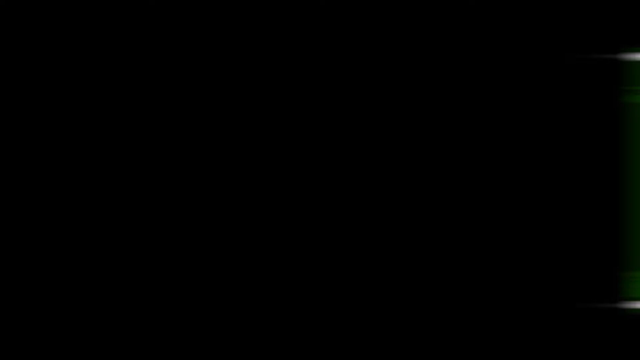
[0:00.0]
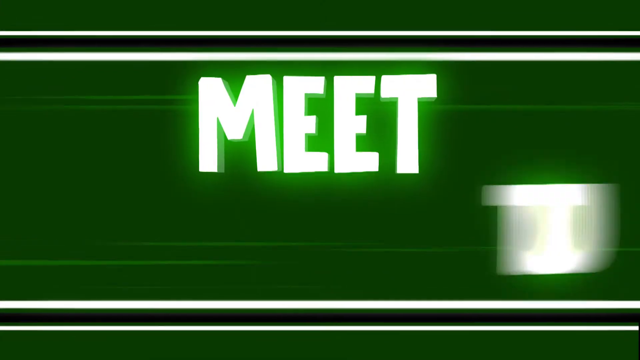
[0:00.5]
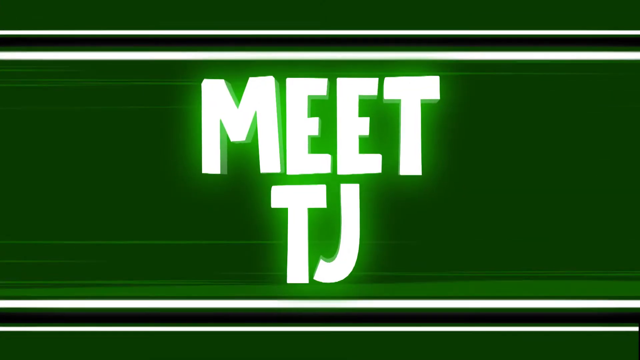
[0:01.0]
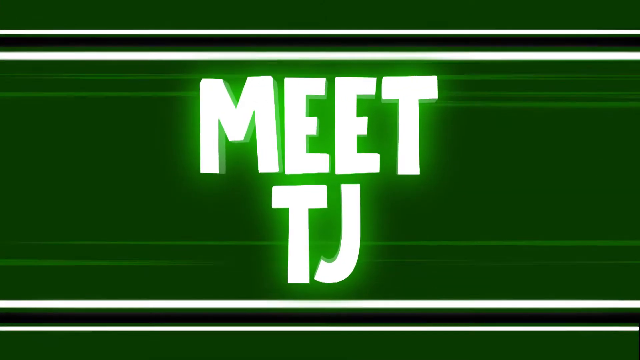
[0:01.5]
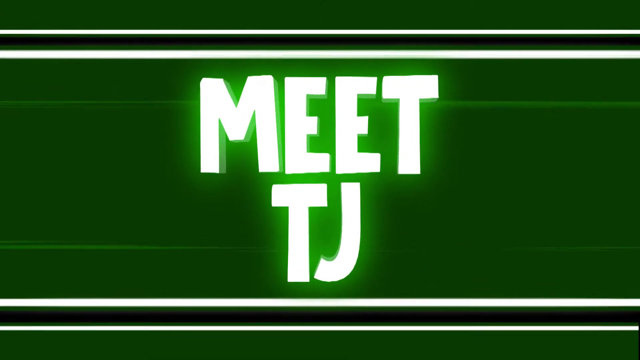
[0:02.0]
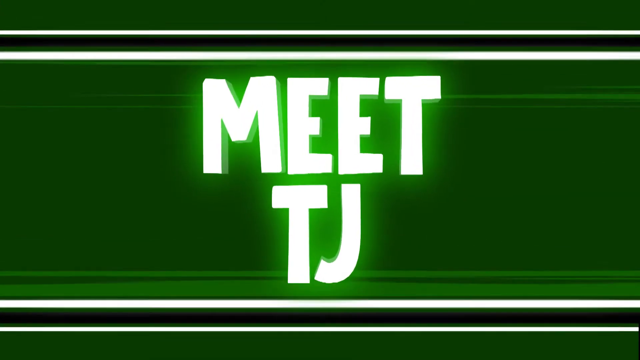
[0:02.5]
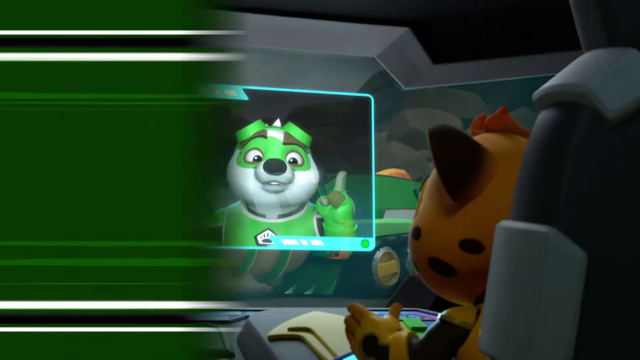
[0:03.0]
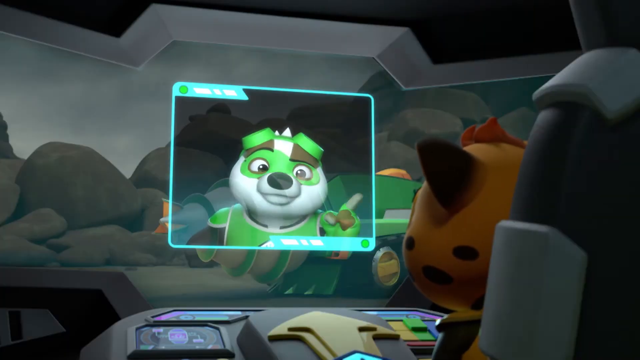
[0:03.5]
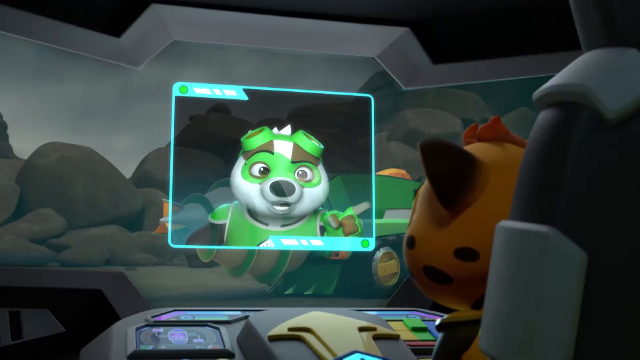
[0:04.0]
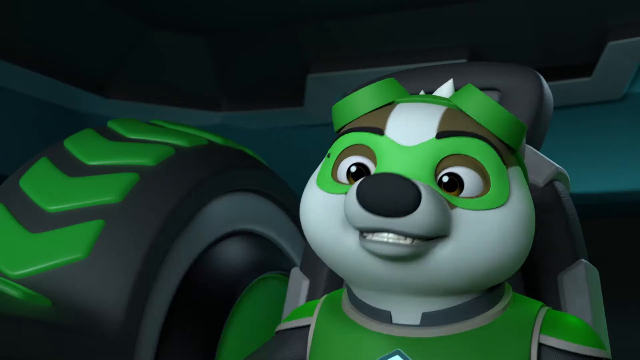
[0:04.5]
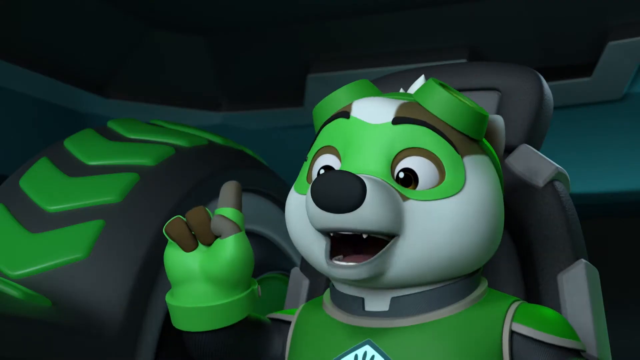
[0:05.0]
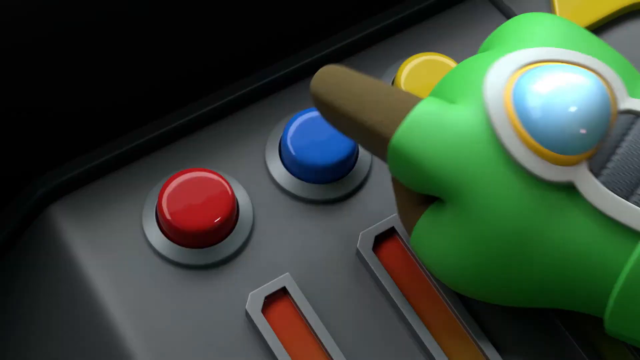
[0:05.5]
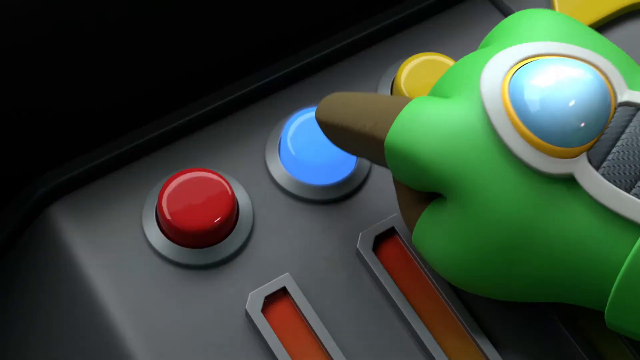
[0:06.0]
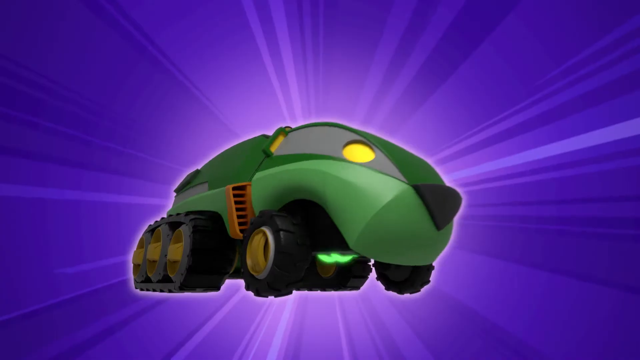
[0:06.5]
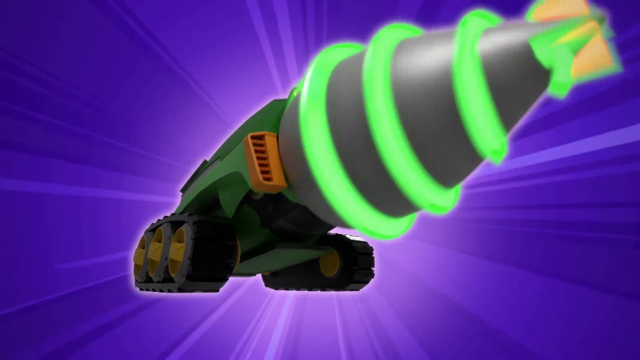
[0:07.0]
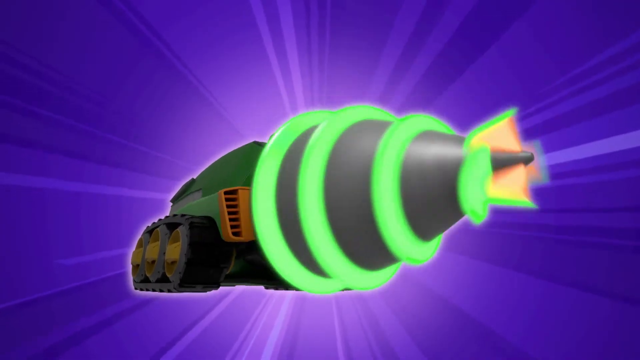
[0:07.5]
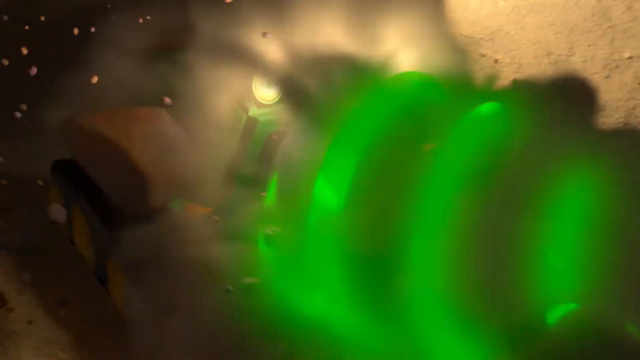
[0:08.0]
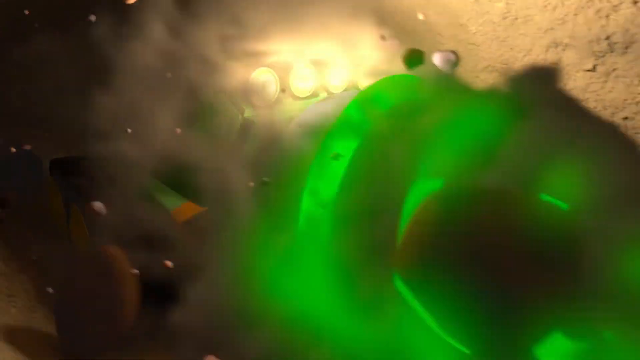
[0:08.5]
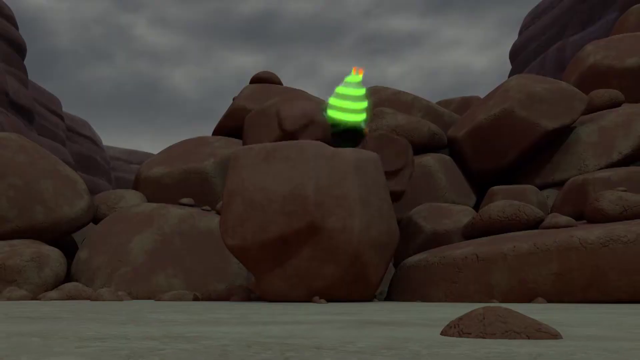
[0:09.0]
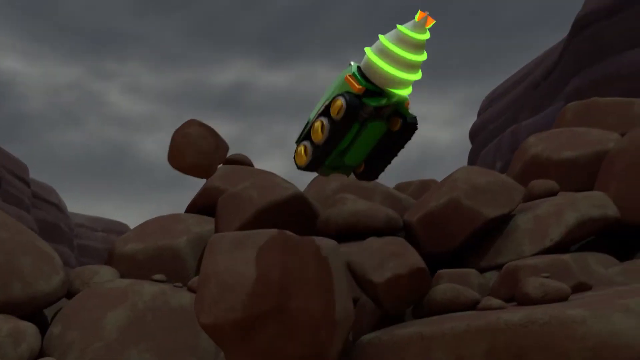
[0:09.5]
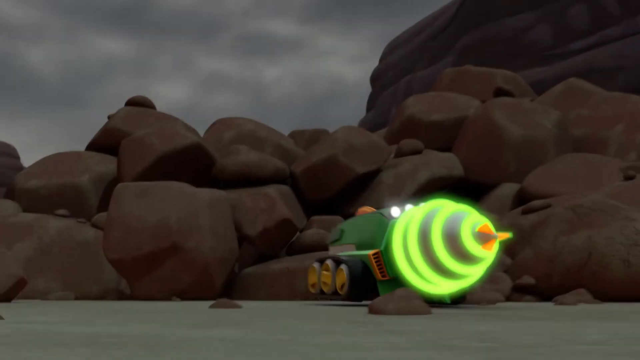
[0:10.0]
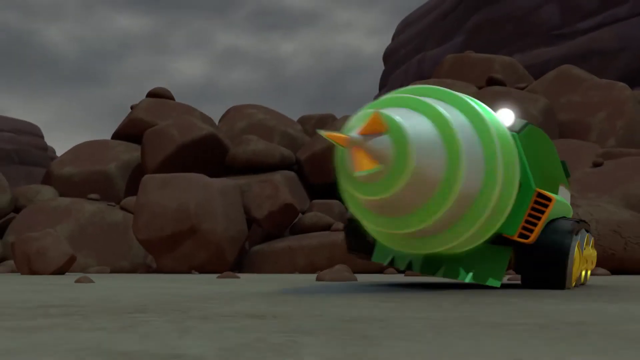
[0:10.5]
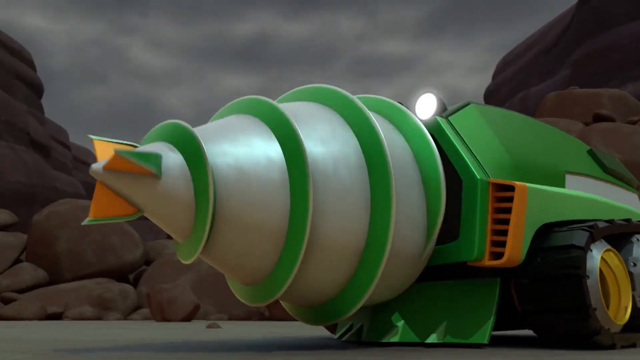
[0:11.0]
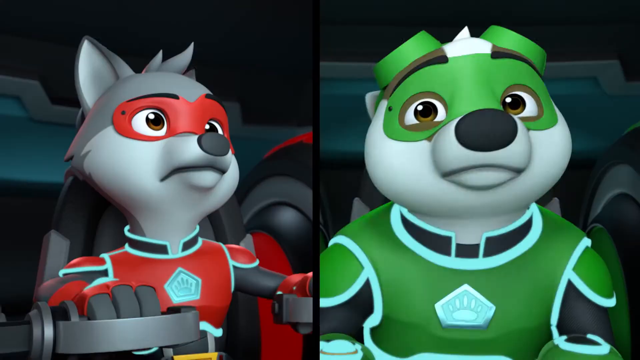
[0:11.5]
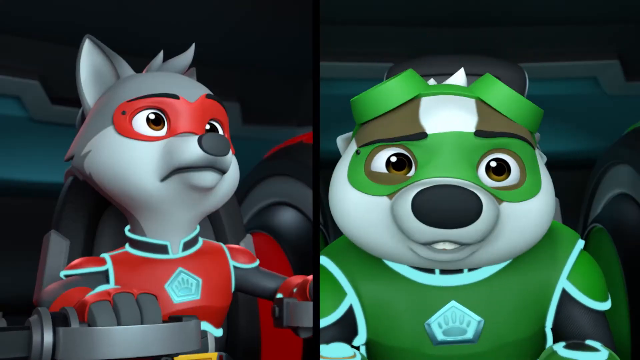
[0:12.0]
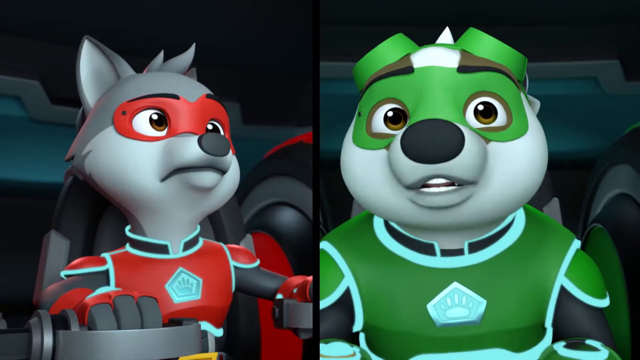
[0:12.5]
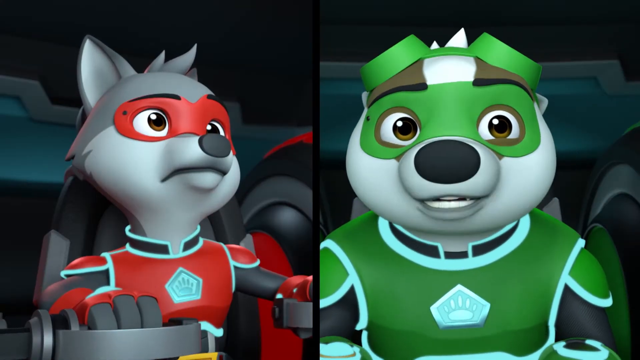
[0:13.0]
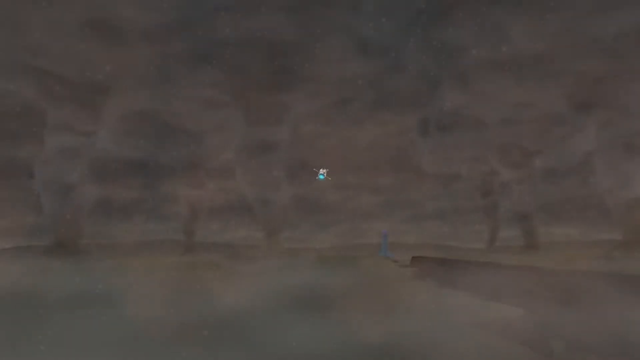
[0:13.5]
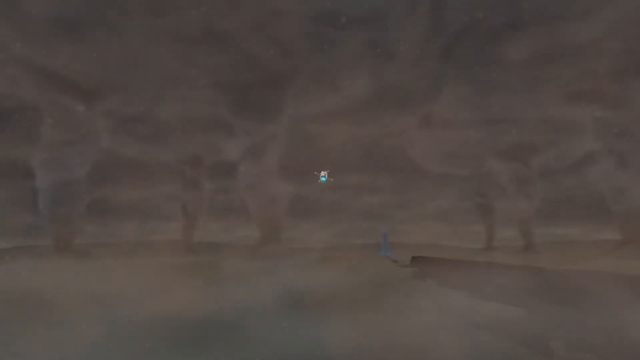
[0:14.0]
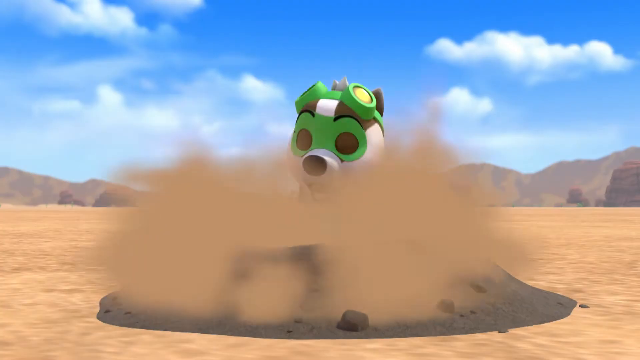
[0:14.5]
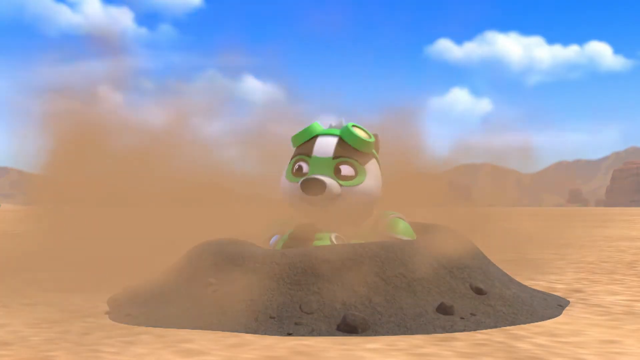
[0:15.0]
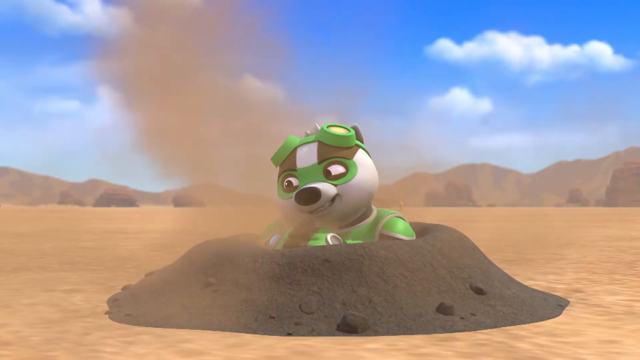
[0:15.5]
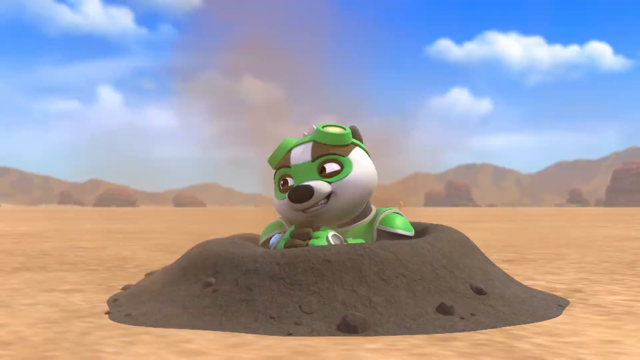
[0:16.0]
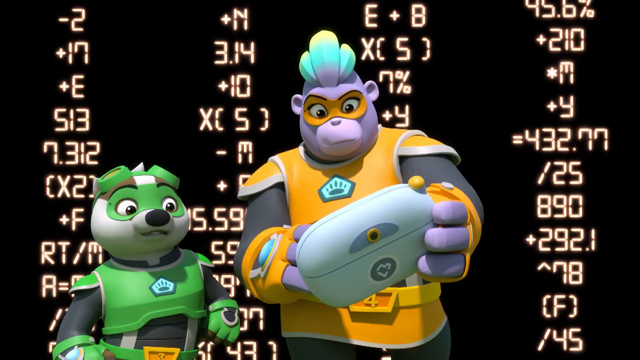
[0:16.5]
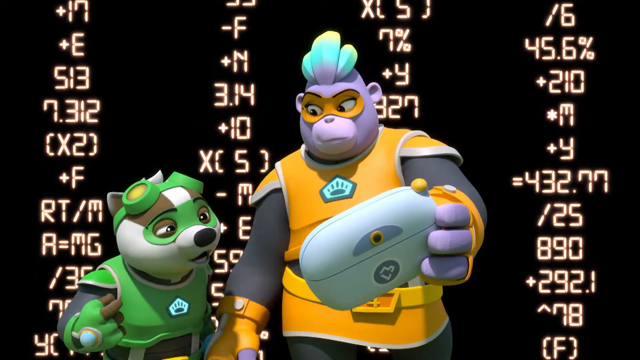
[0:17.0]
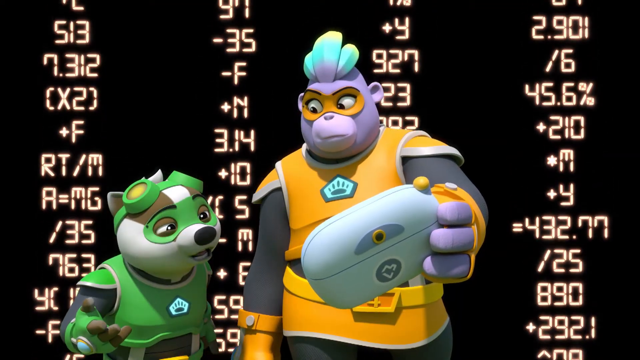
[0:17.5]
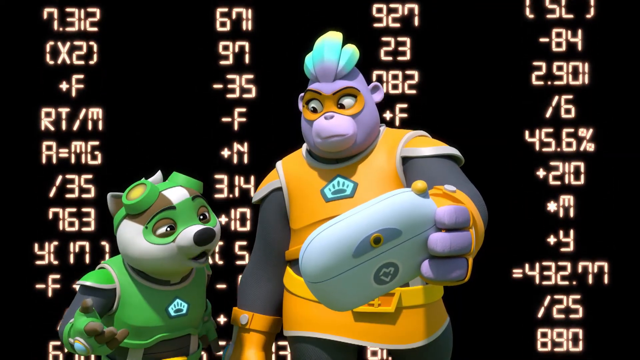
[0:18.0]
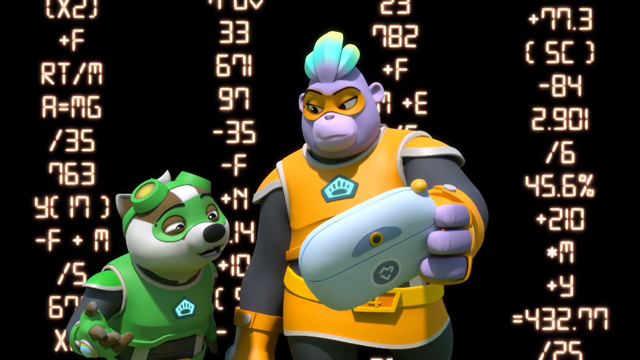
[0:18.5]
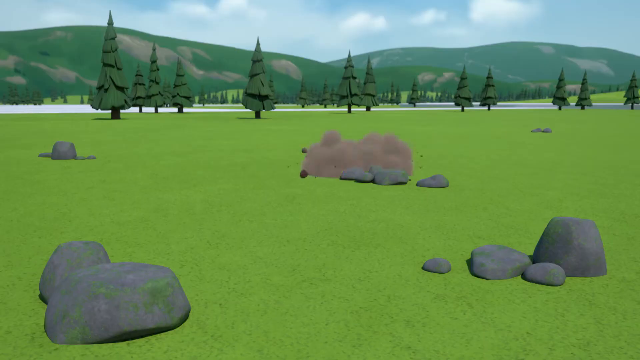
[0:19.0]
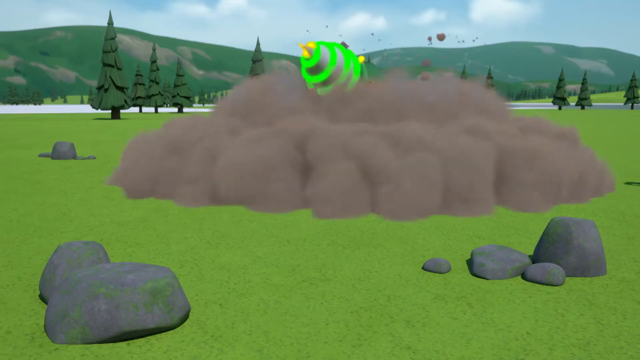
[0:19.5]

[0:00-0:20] The video opens with "meet TJ." TJ, possibly a bear, wears green and white and operates a vehicle that comes out of the rocks and out of the sand. The scenes switch very quickly, so it appears to be a trailer. TJ seems to be a cartoon hero who saves people. It looks like he is on a screen talking, and there are futuristic machines. He comes up, learning and talking with other characters about how to rescue others, and he speaks to another character through a screen. He has a machine that can cut through rocks and reach out to rescue people. There are lots of colors, and several characters are listed. It appears to be a new show for young children.